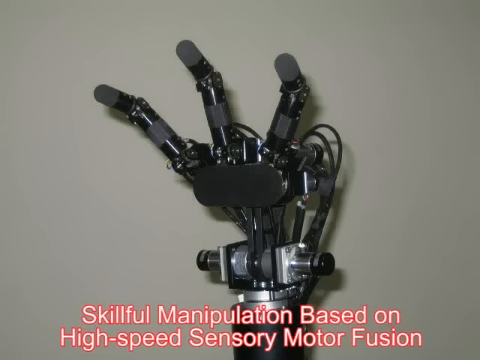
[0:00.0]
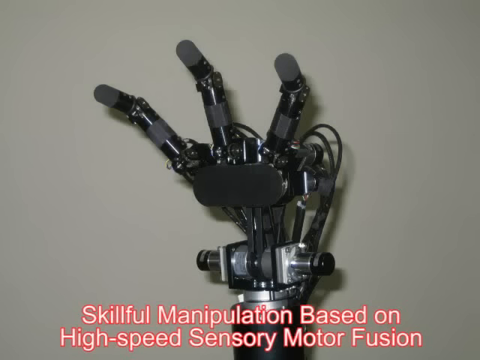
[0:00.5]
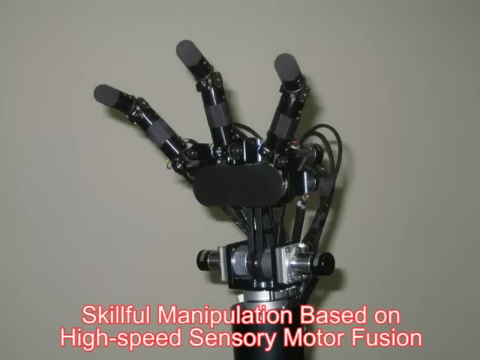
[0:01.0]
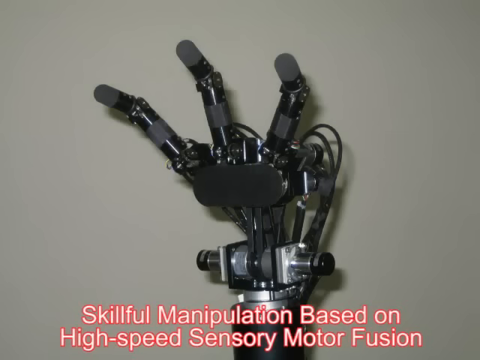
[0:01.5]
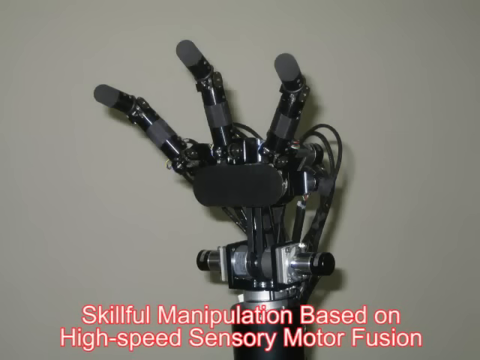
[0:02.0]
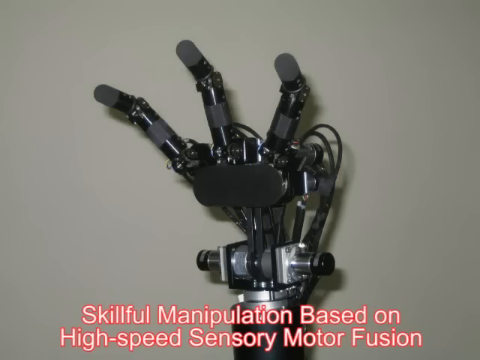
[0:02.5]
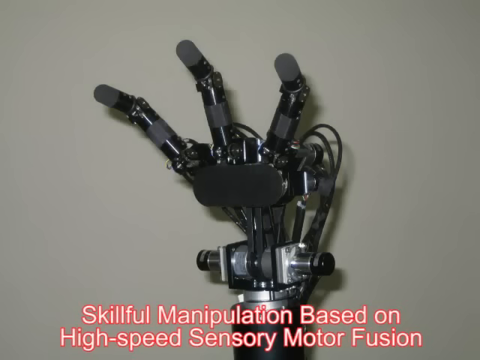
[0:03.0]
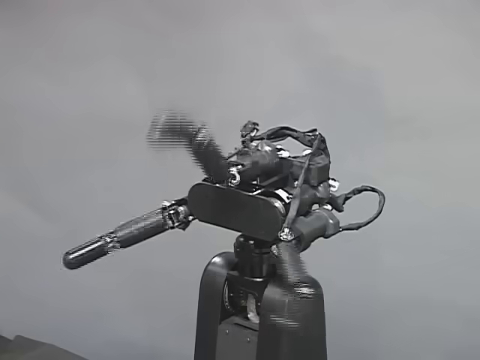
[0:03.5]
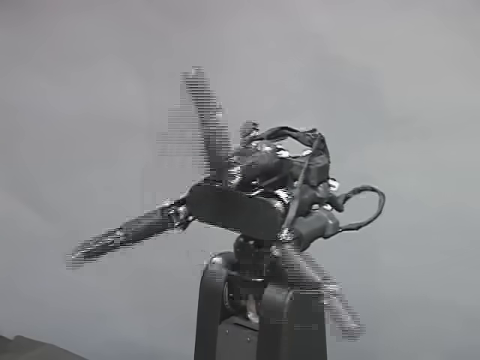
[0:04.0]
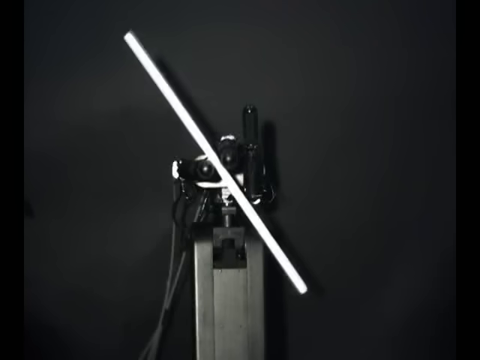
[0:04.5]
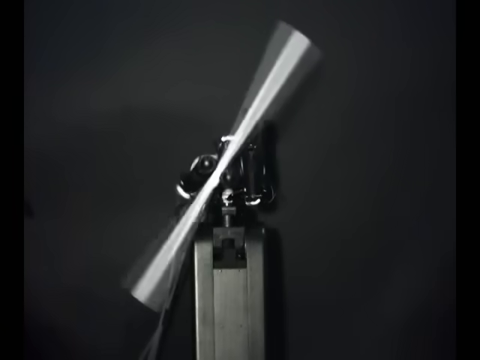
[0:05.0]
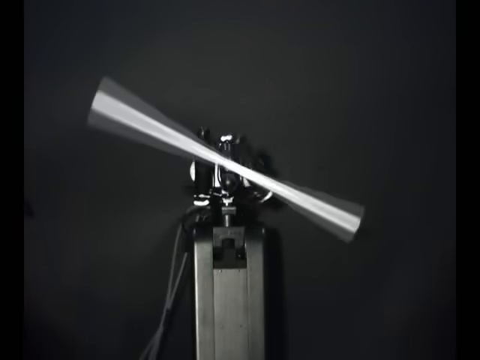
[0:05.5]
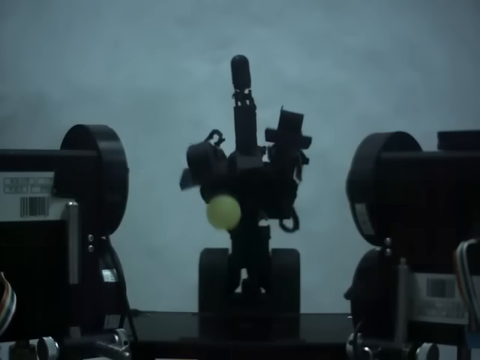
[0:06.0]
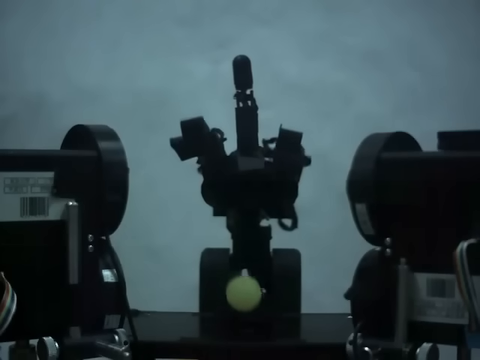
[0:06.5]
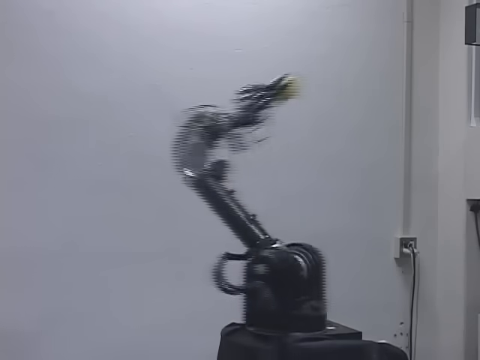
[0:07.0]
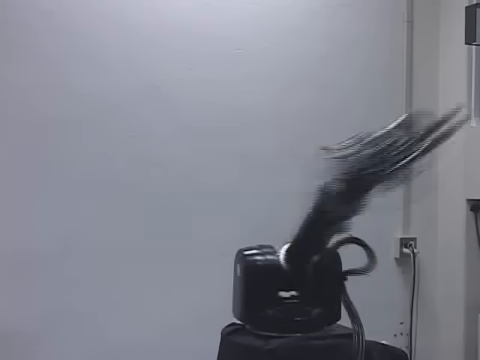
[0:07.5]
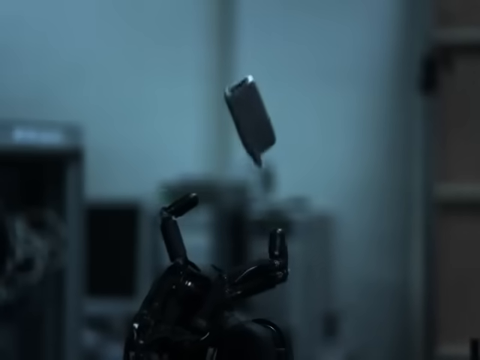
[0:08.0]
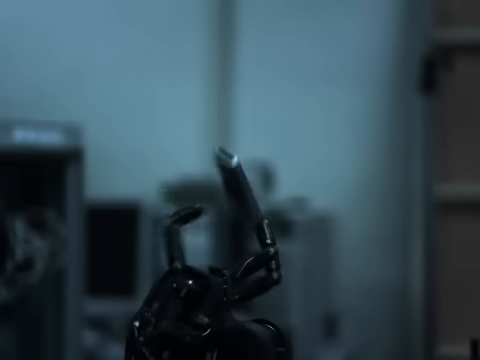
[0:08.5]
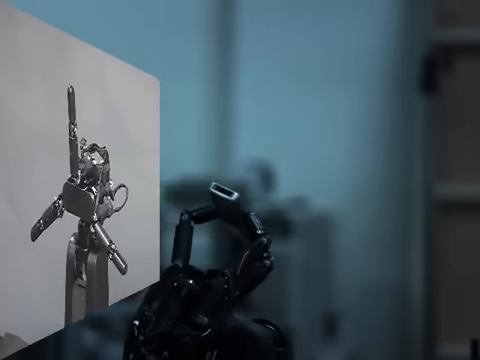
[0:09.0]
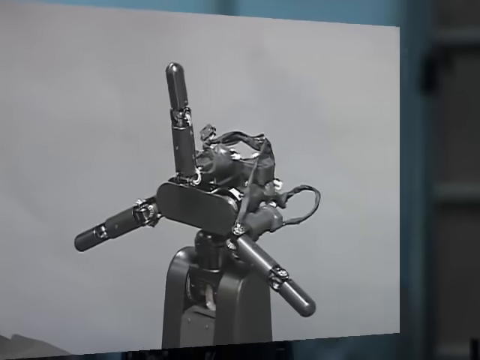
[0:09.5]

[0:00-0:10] A home-movie-style video shows various robotics; the video quality and sizing suggest it was made in a much older time frame. At the very beginning a robotic hand is shown that kind of resembles robotics from the 1990s or early 2000s: very mechanical levers, pulleys and other simple machines rather than computer chips and more high-tech parts. At the very bottom of the image, centered, is the text "skillful manipulation based on high speed sensory motor fusion" in white lettering with a kind of red outline. The video then shows various short clips of robots in a very quick format. The first has various fingers kind of grabbing with three prongs; next is a robot against a darker background that is holding something like a rod, kind of twisting it and moving it around. Various other clips show robotics kind of catching items and moving themselves around.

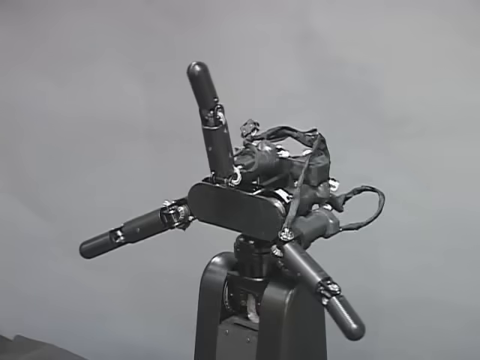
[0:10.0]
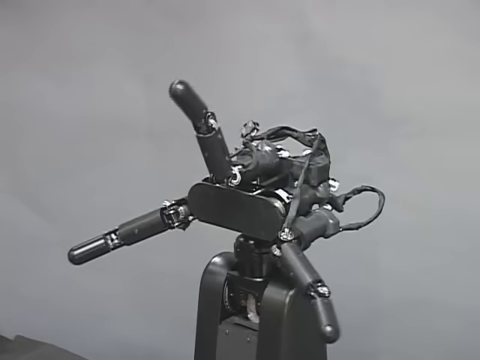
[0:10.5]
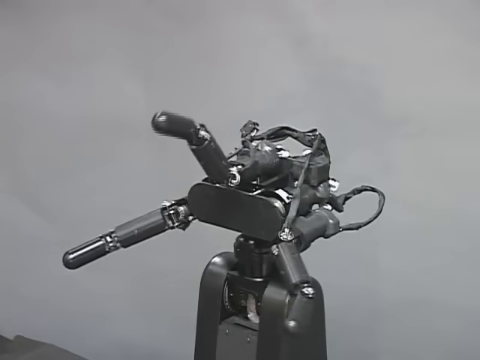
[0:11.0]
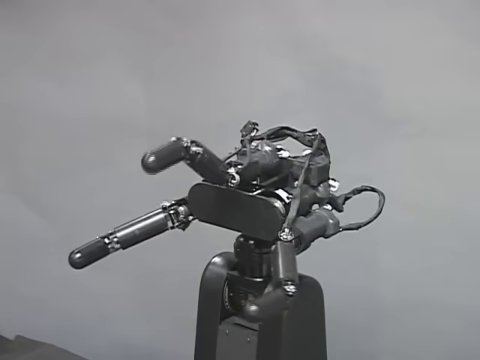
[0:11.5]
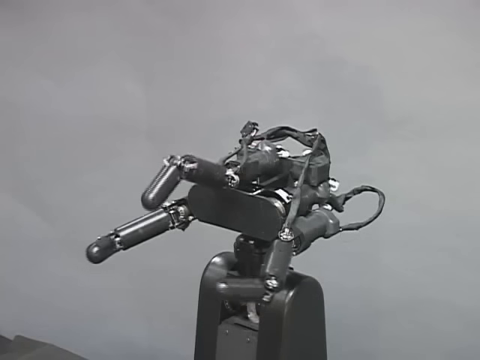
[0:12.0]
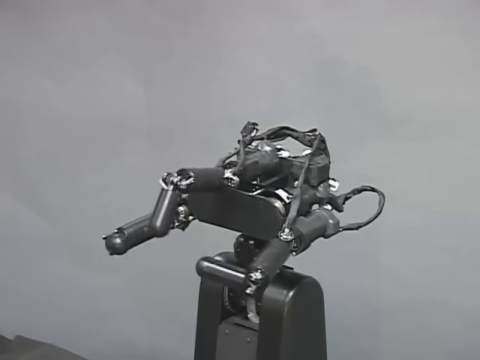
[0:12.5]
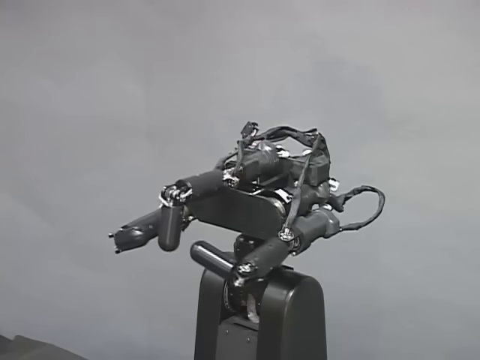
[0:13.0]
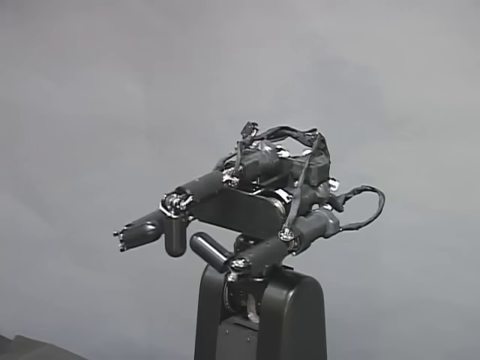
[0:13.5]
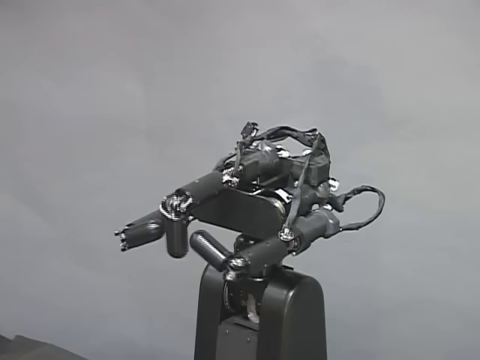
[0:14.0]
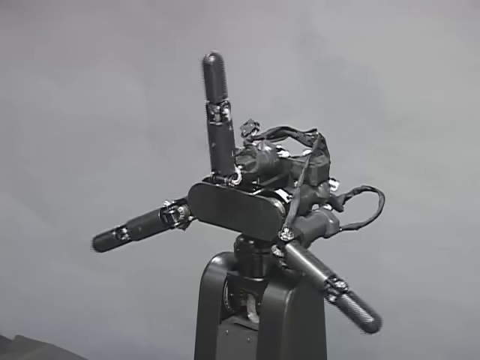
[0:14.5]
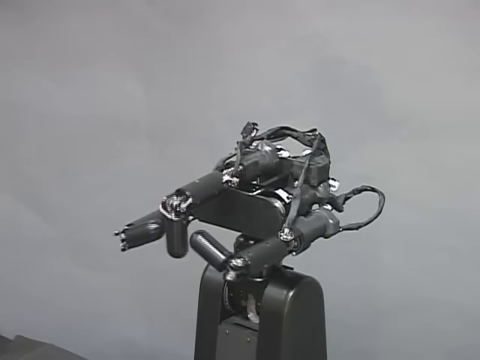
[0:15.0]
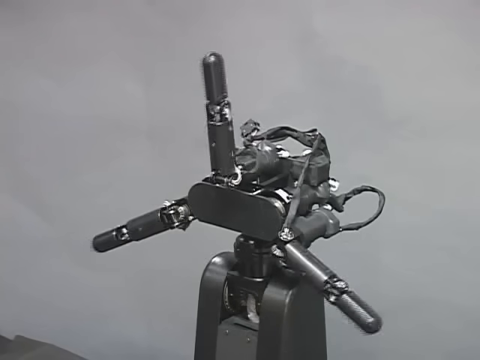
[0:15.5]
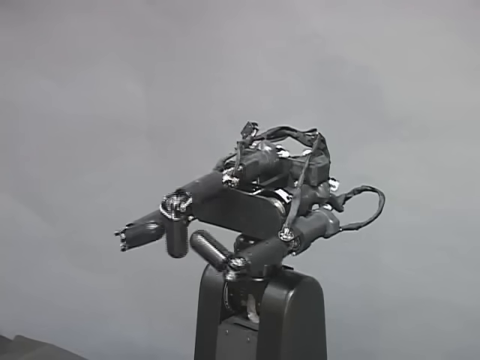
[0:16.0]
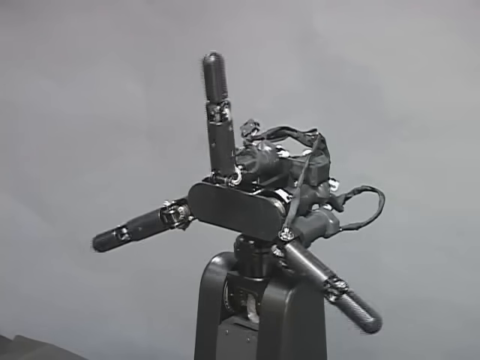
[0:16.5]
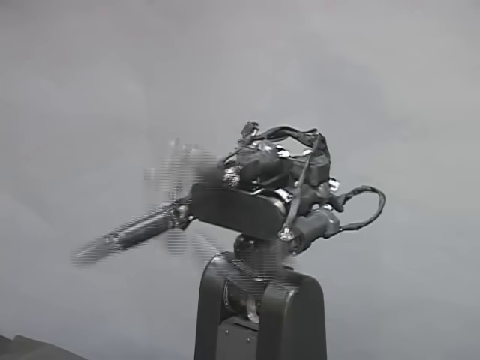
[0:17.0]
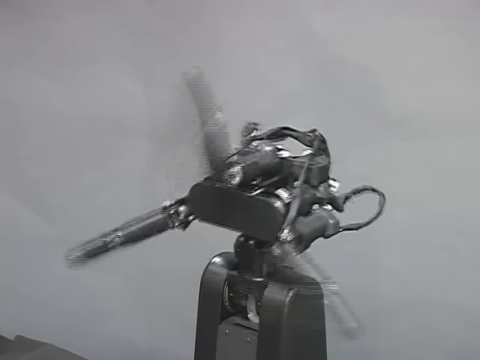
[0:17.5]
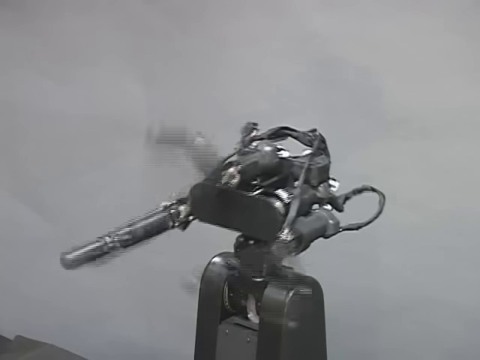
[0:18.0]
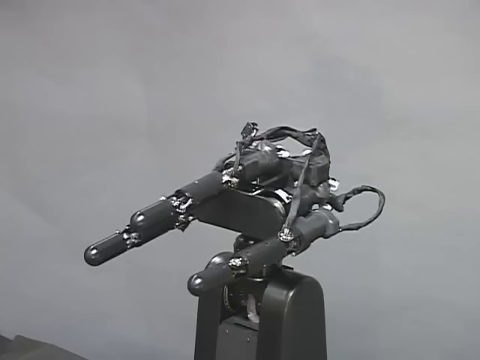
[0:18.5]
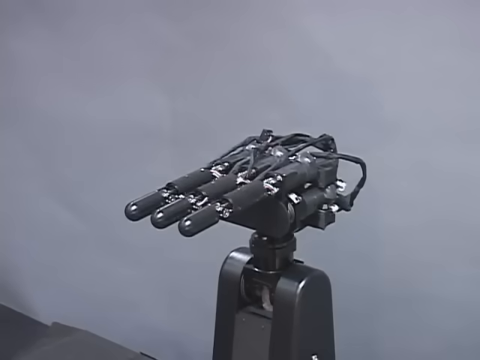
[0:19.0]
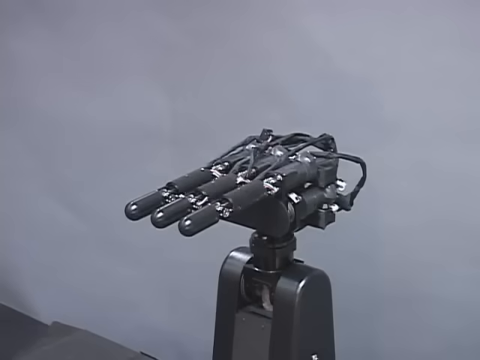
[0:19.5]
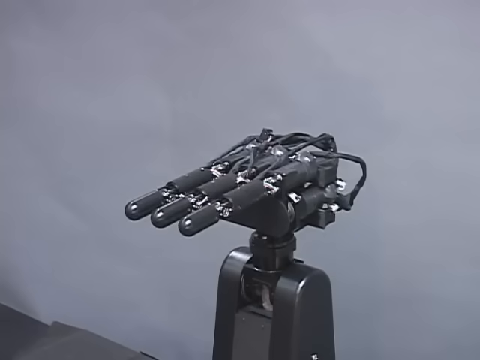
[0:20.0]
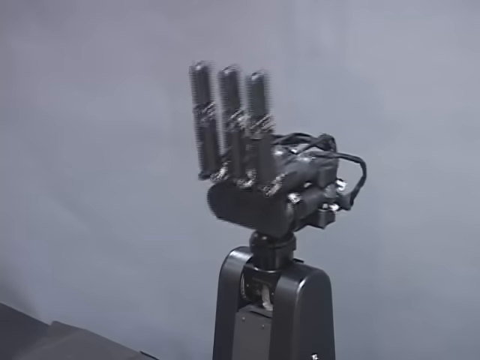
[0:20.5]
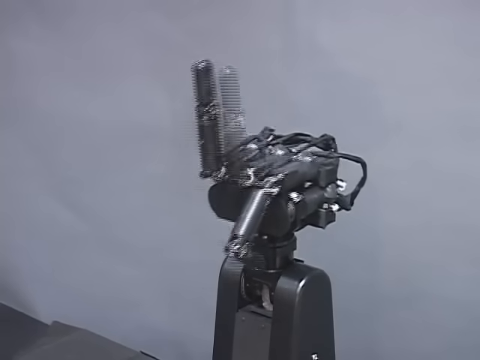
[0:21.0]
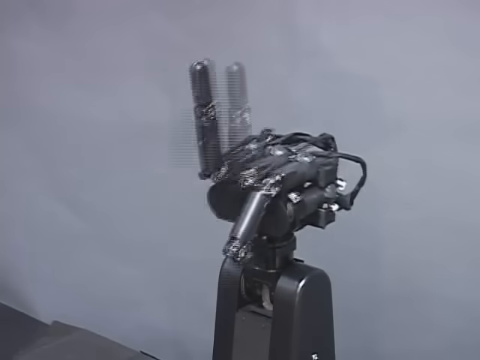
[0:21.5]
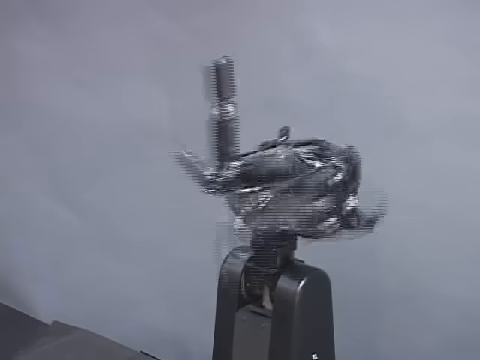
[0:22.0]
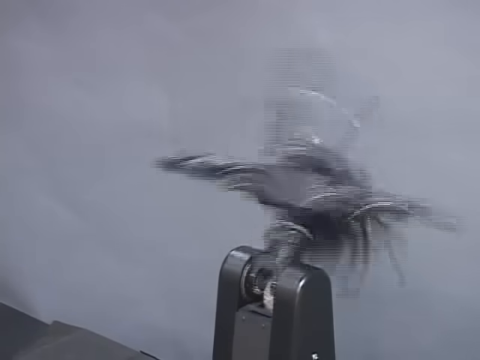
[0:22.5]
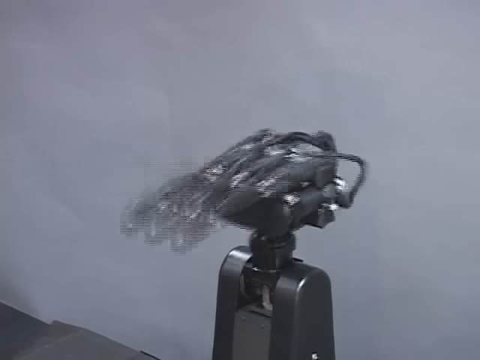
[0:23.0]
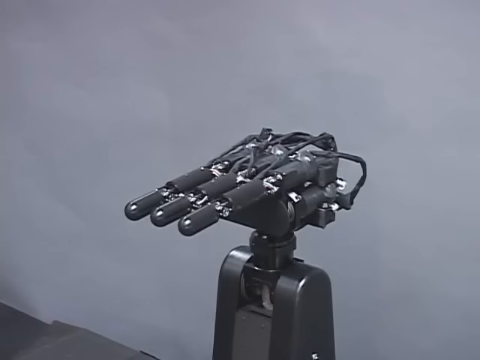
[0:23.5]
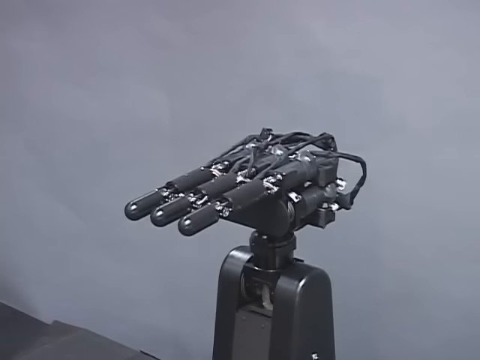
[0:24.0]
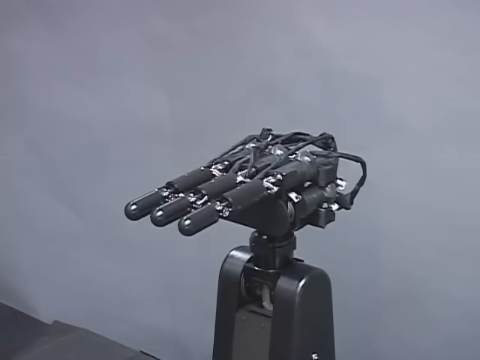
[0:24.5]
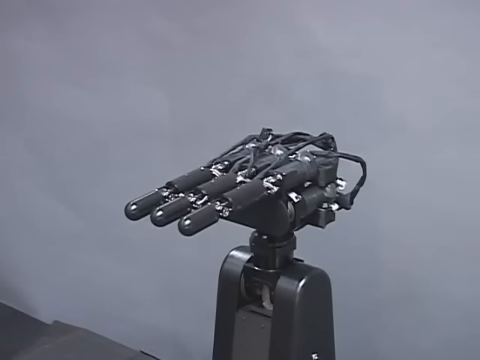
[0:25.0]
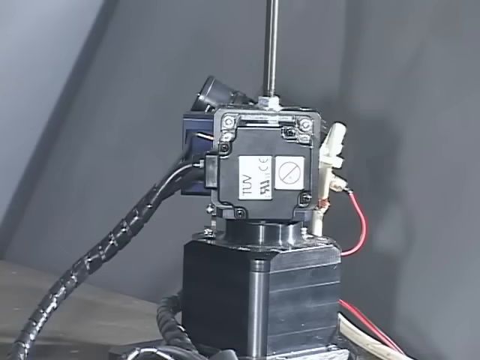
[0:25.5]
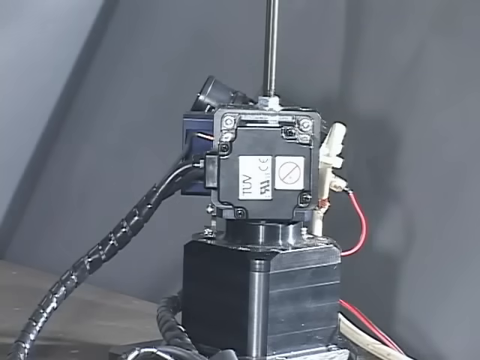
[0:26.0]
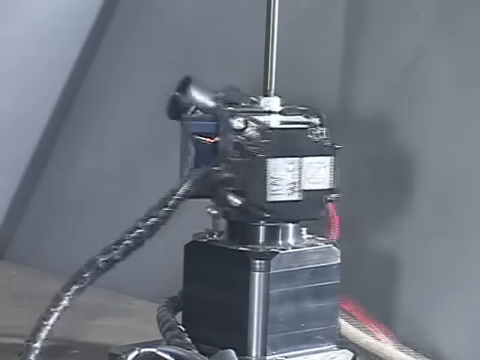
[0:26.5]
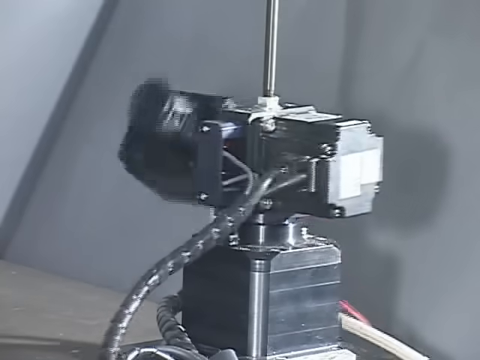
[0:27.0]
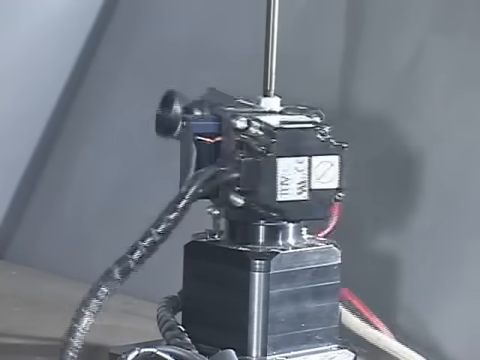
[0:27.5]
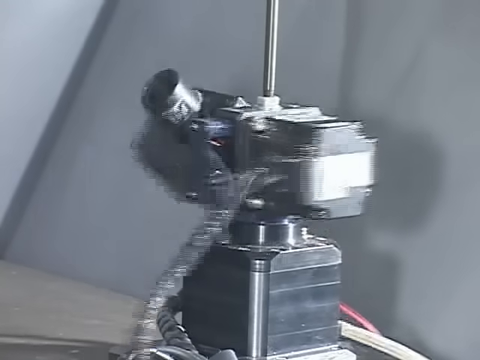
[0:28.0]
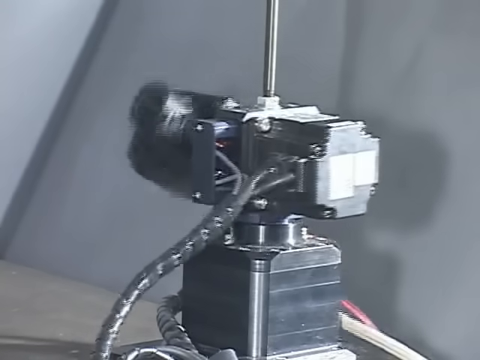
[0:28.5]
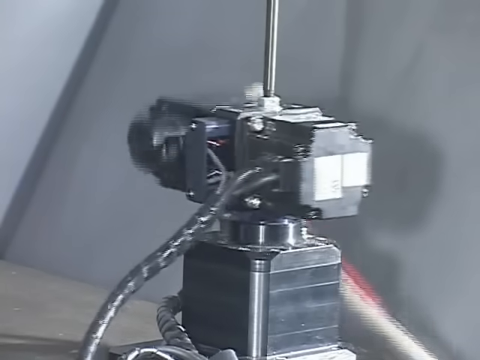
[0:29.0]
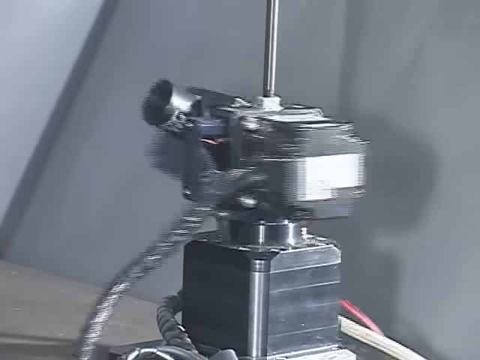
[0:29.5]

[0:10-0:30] The three-pronged robot kind of grabs and moves backwards and forwards, as if grabbing onto something. The same action is then shown in fast motion, done very quickly, looking almost like a glitch in the video. Another robot with three fingers appears; the fingers are lined up next to each other, then fly up very quickly and move around in a sporadic way that is calculated but looks random to the normal eye. The last robot shown is something on top of a rod that moves around from left to right. There appears to be a cord on the right side of the robot, and it seems to move around, possibly looking at something, with a camera on its left side. All of these robot pieces seem very dark gray, kind of like steel or titanium.